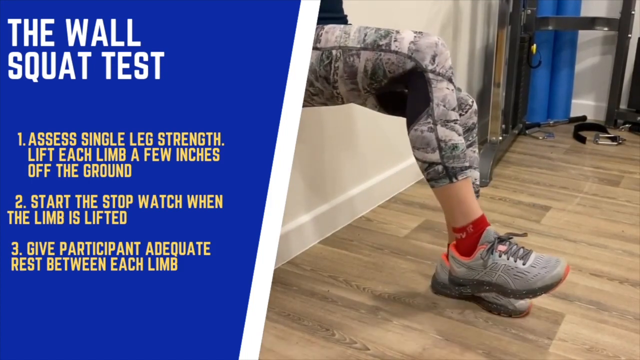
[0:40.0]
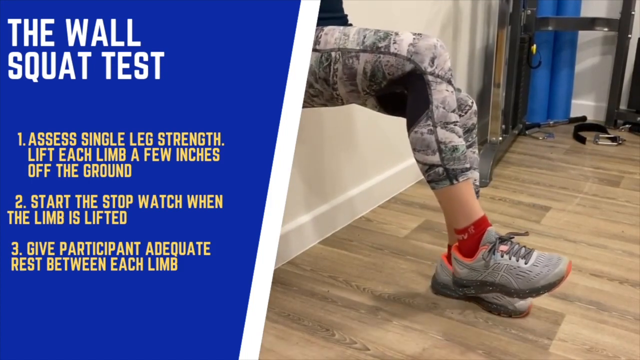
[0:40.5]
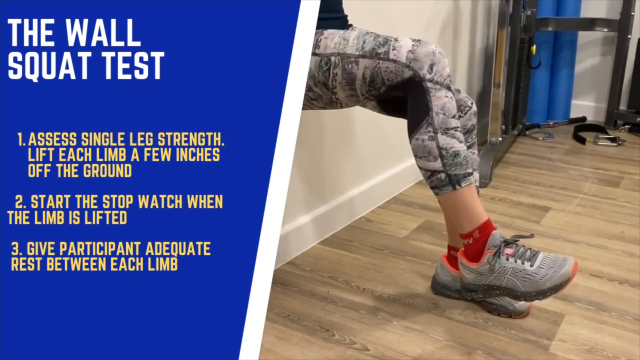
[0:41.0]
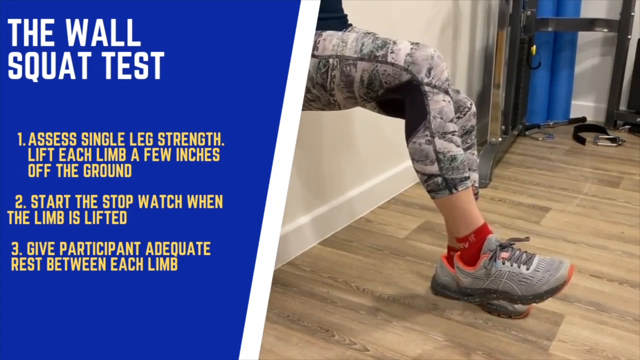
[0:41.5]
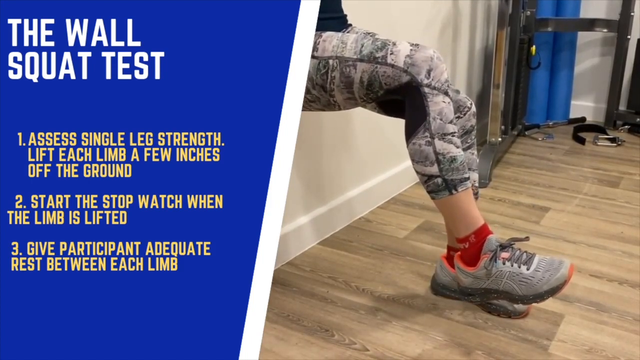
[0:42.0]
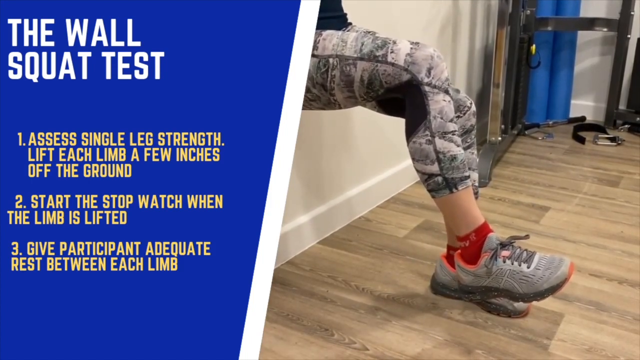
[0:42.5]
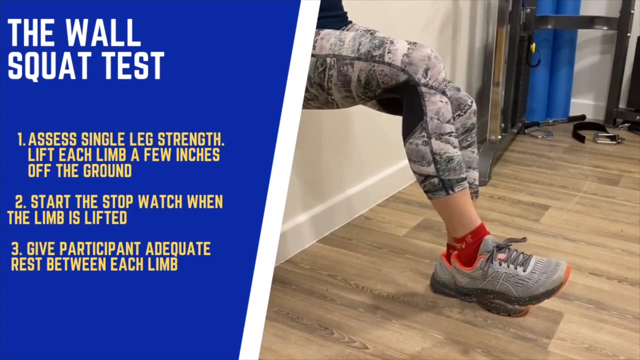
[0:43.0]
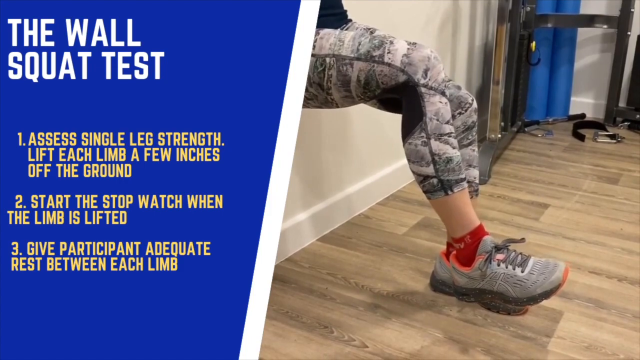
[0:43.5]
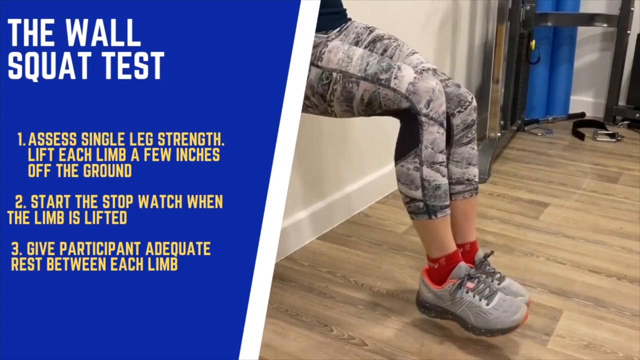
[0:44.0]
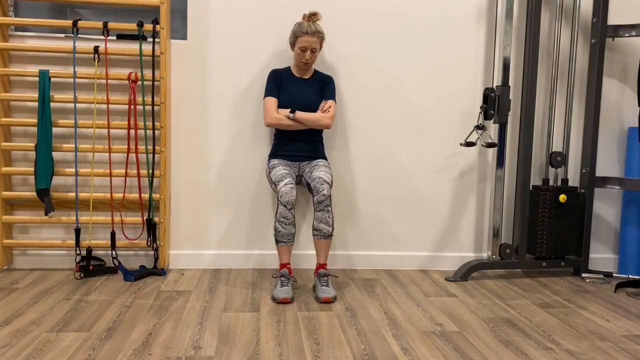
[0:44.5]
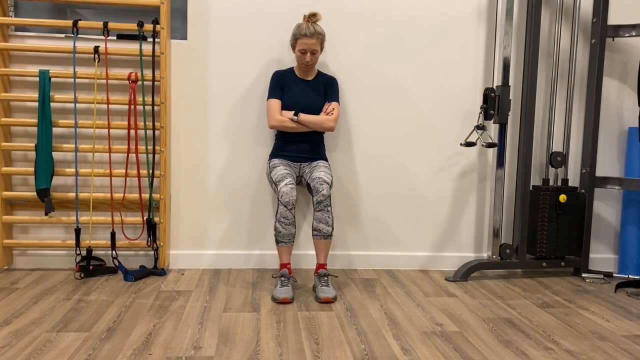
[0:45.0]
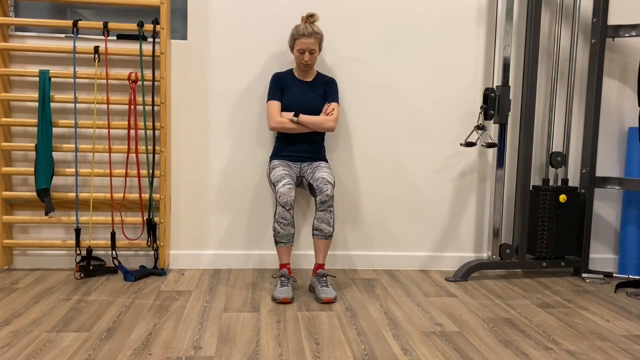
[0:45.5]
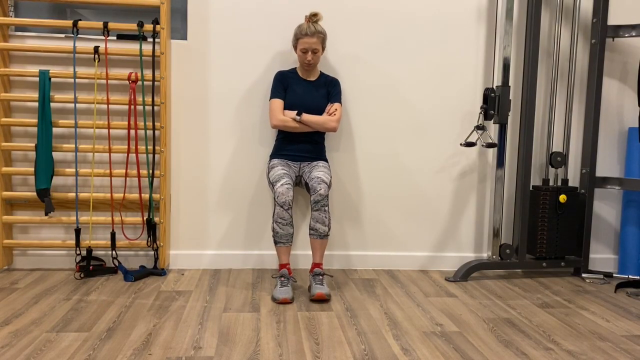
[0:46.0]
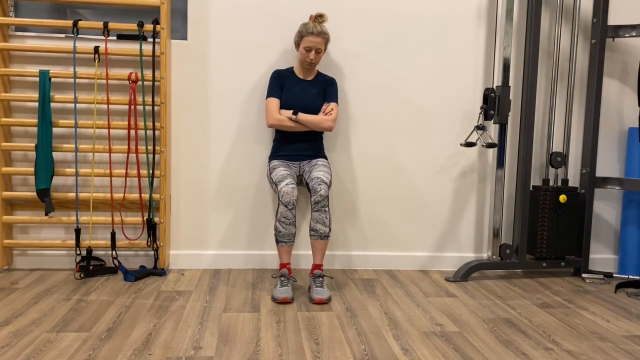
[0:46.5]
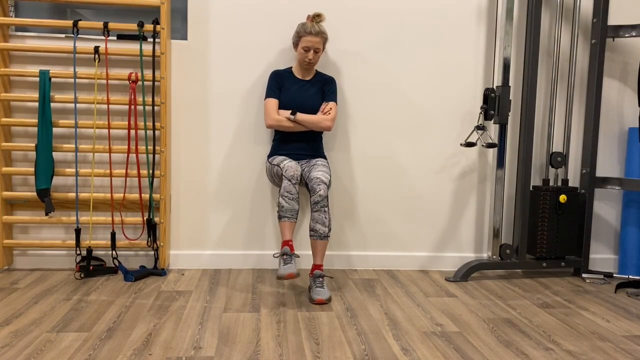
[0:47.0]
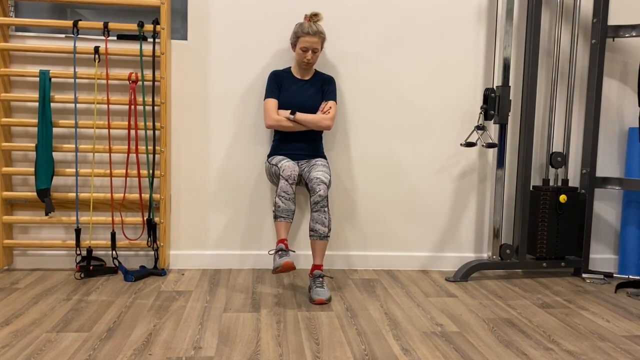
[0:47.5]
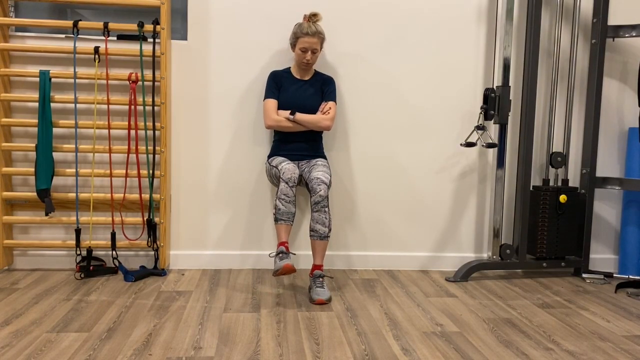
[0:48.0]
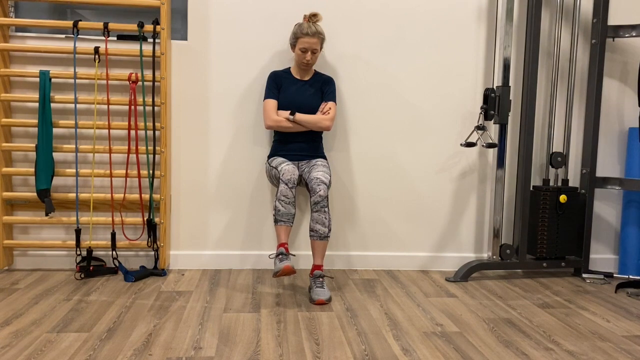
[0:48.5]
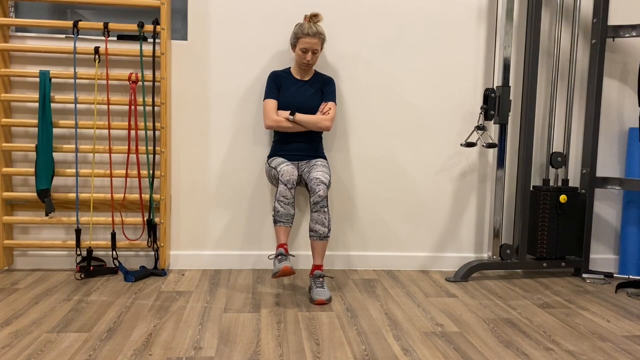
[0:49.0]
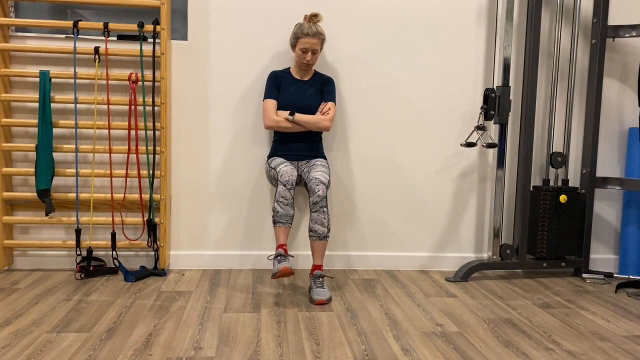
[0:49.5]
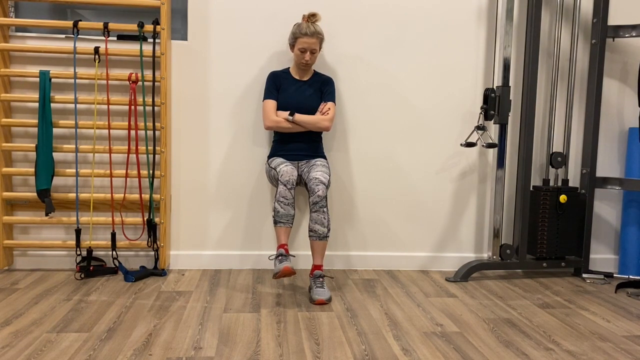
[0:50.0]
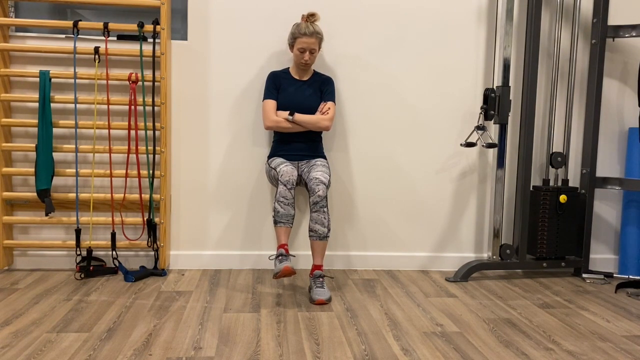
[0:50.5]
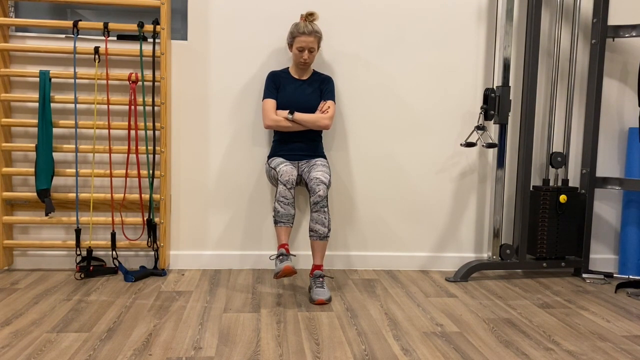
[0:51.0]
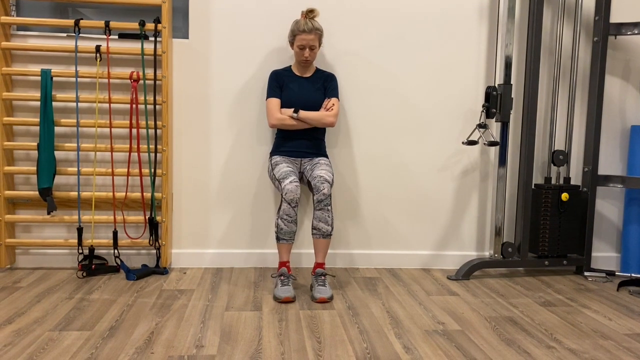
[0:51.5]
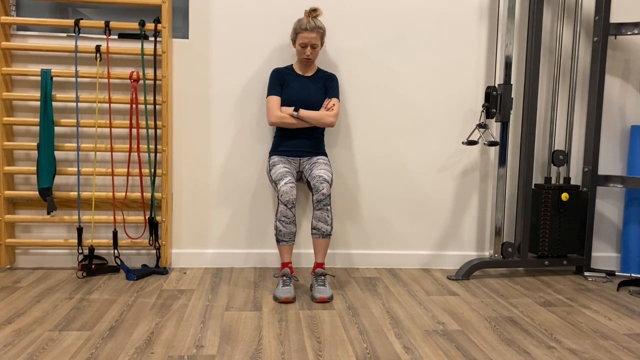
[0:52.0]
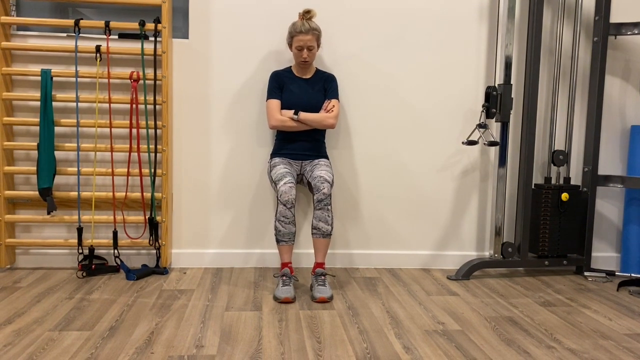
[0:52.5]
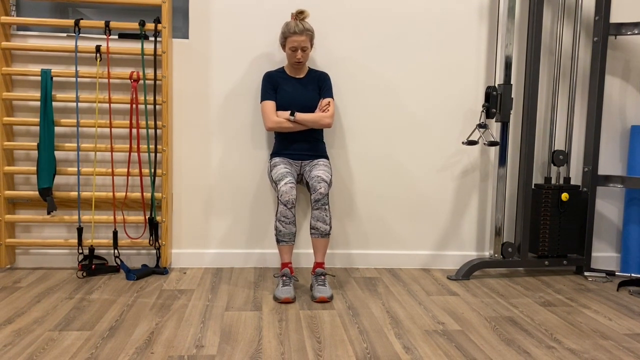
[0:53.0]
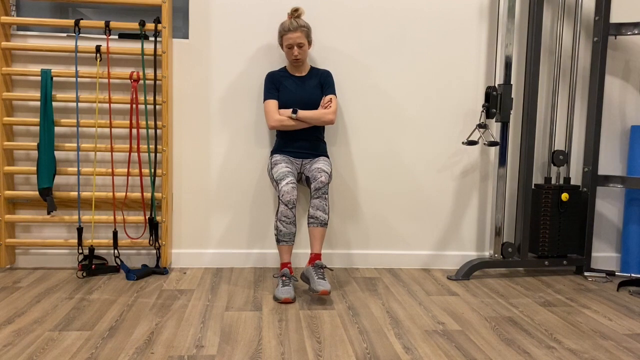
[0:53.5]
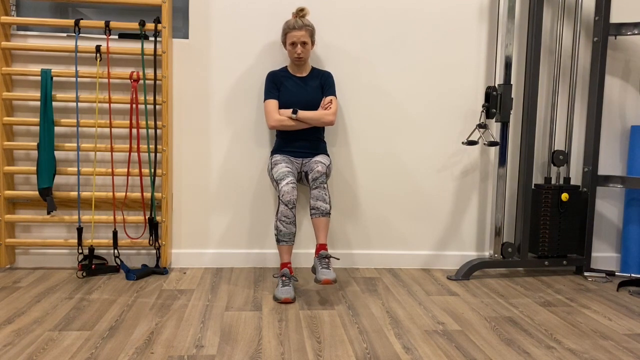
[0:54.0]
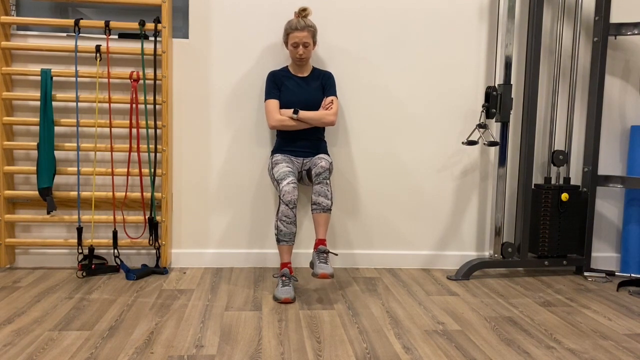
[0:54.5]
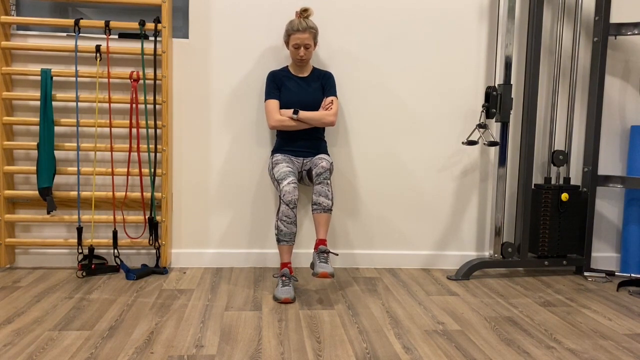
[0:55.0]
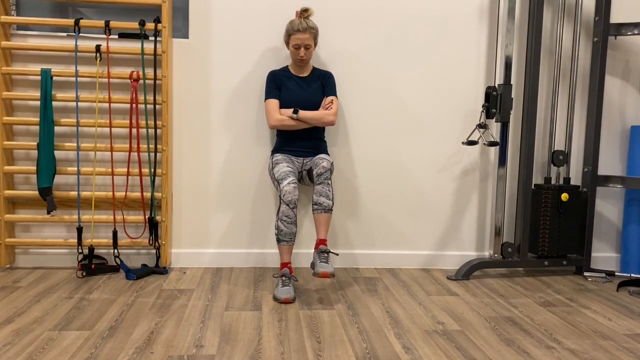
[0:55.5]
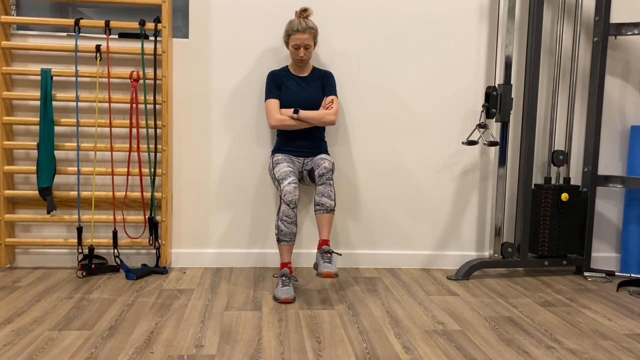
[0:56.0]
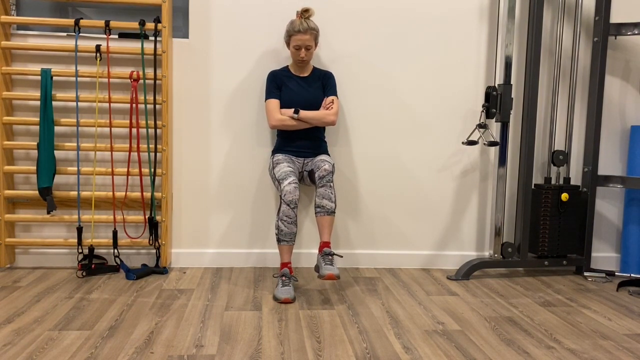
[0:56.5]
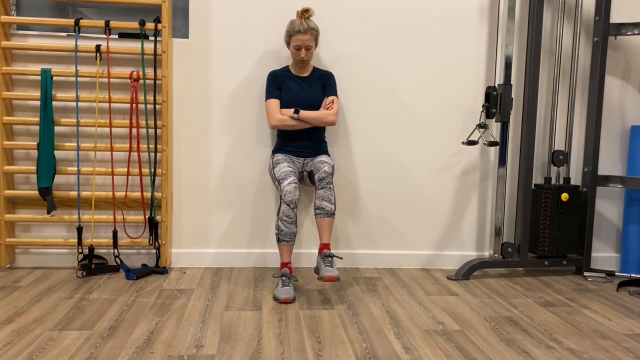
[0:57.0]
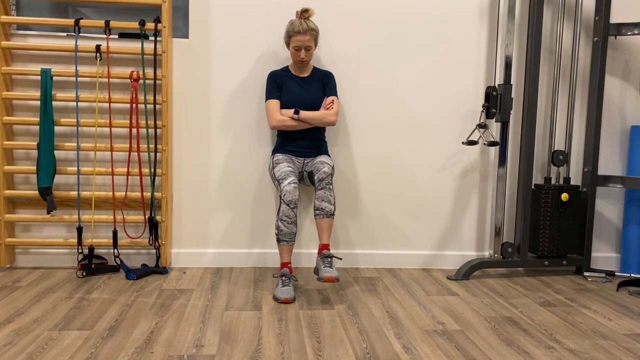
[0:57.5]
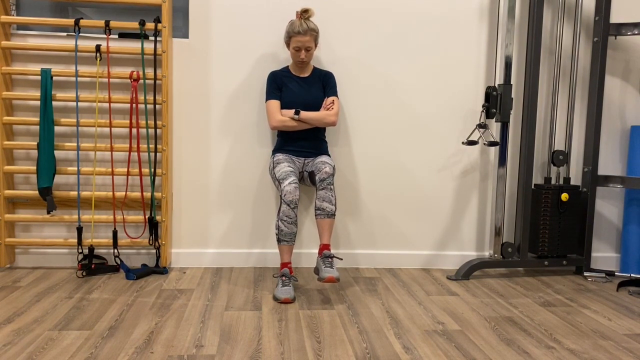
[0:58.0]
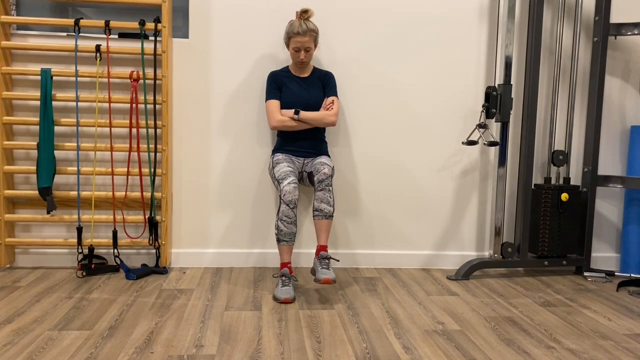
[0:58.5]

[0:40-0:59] On the left side, white text reads "the wall squat test." Below it, after a space, yellow text includes "Lift each limb a few inches off the ground," "stopwatch when the limb is lifted," and "3 give participant adequate rest between each limb." The woman, who is kind of facing the viewer, raises what looks like her left leg and holds it up. Whereas she was shown earlier as a still image, she now moves: she holds the leg up for a few seconds, puts it down, and then switches to using the other leg.